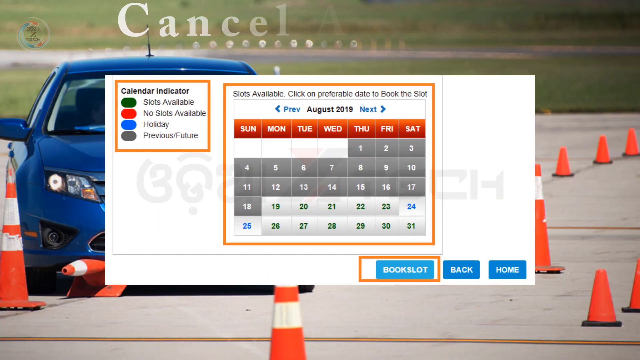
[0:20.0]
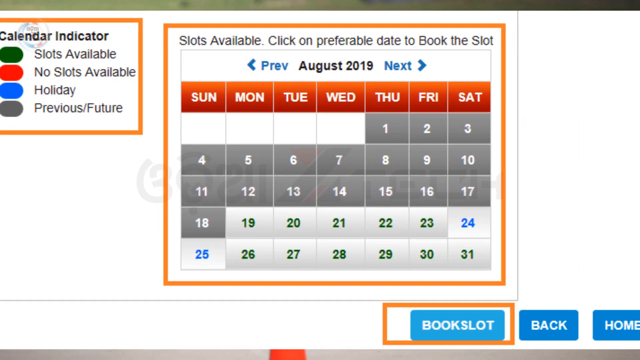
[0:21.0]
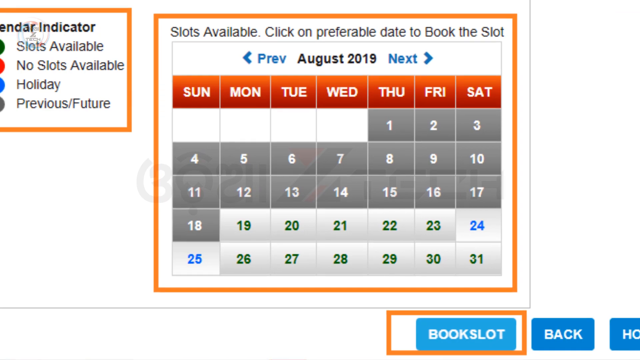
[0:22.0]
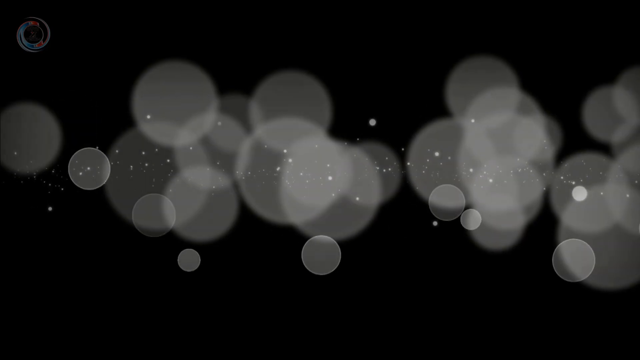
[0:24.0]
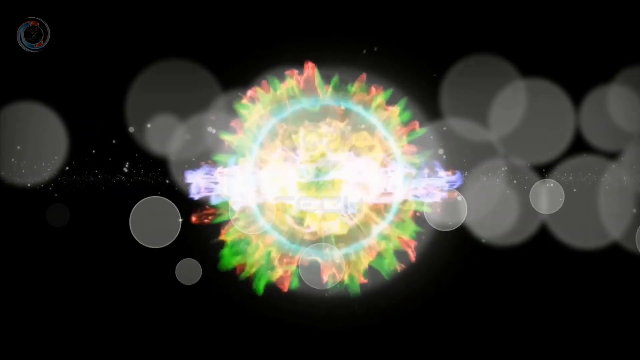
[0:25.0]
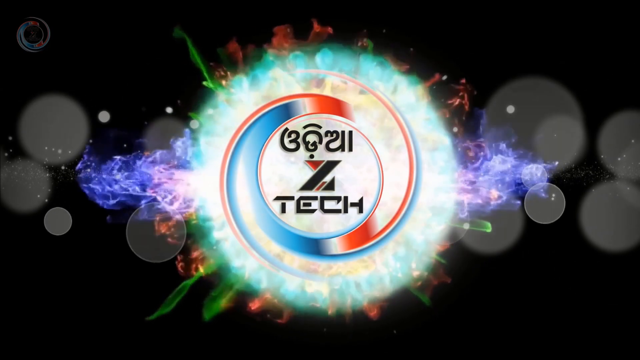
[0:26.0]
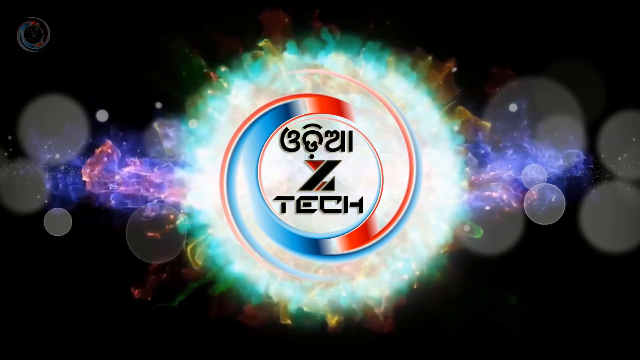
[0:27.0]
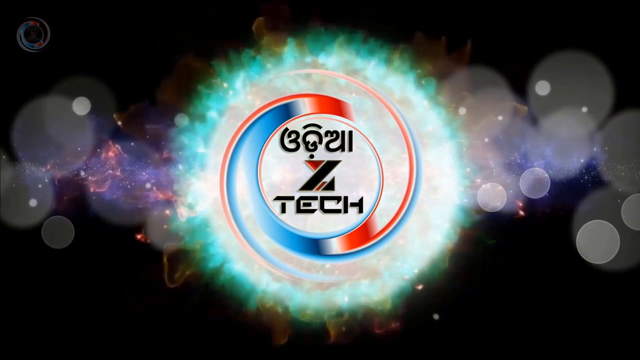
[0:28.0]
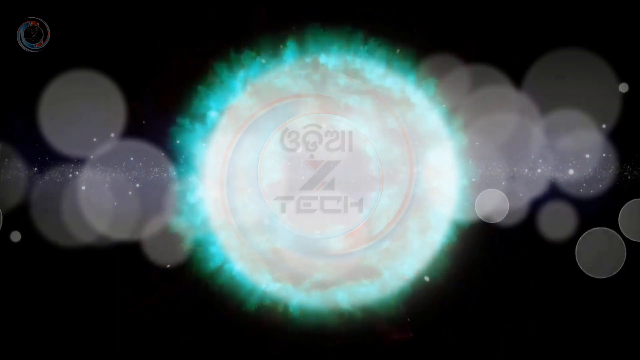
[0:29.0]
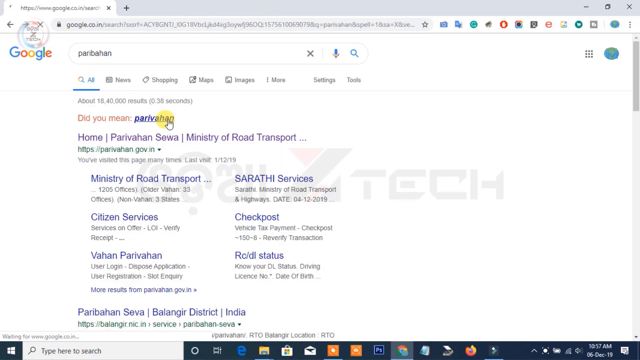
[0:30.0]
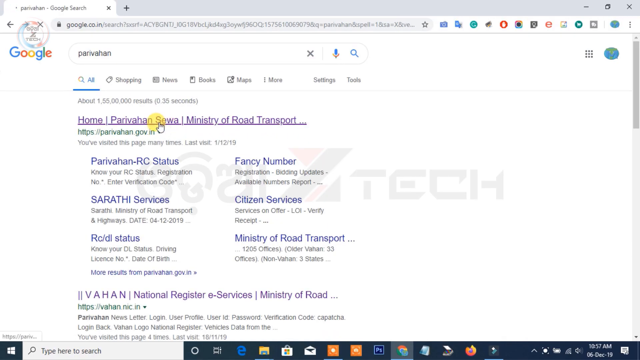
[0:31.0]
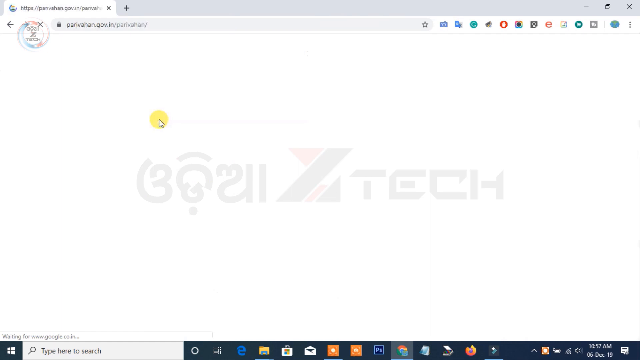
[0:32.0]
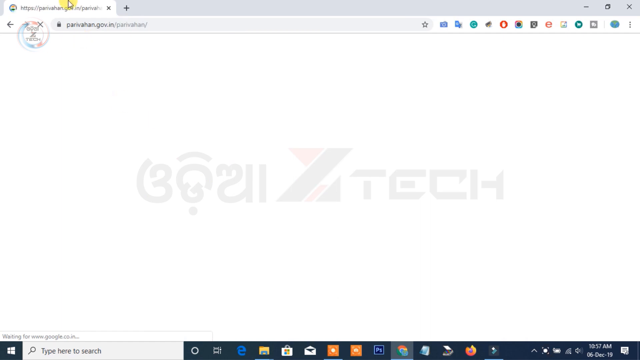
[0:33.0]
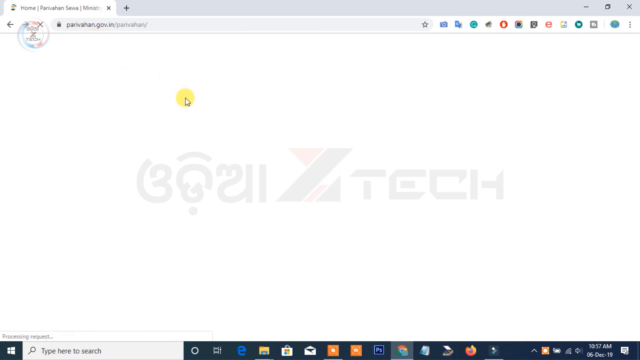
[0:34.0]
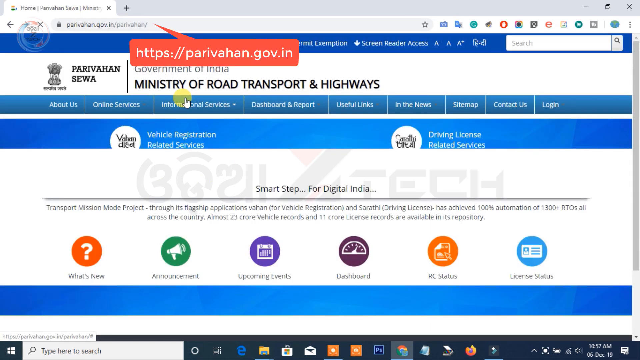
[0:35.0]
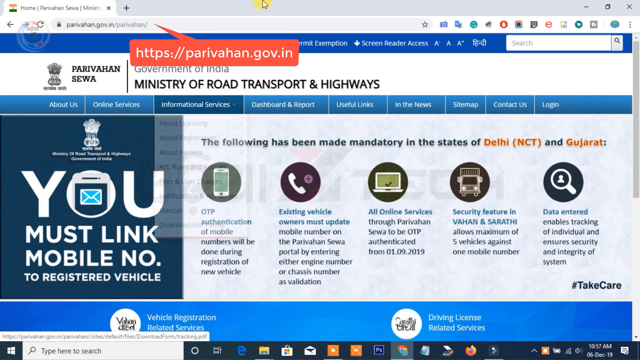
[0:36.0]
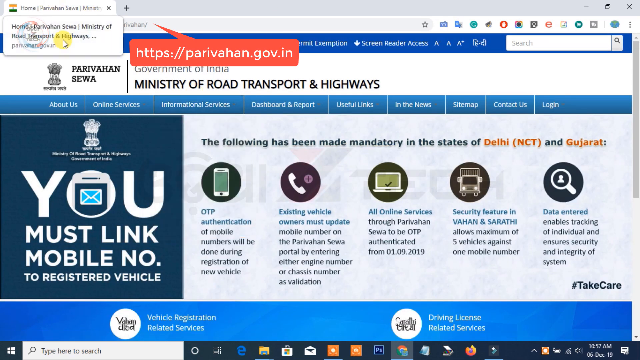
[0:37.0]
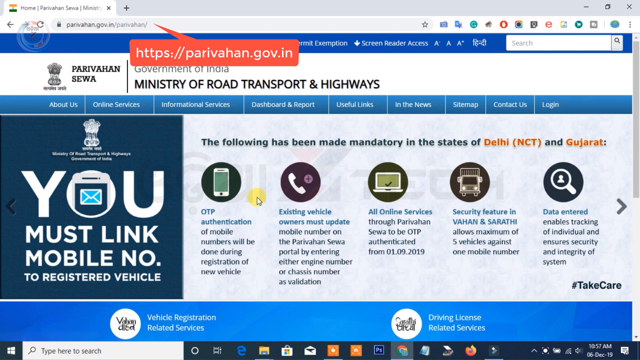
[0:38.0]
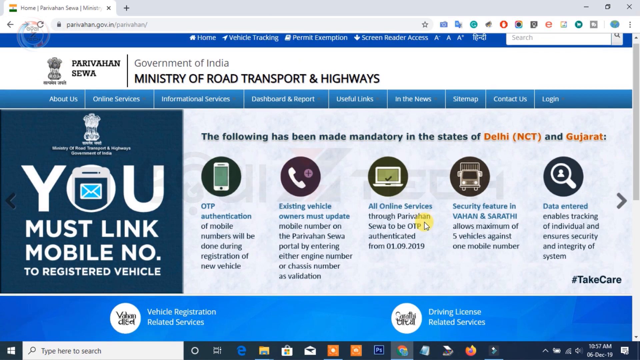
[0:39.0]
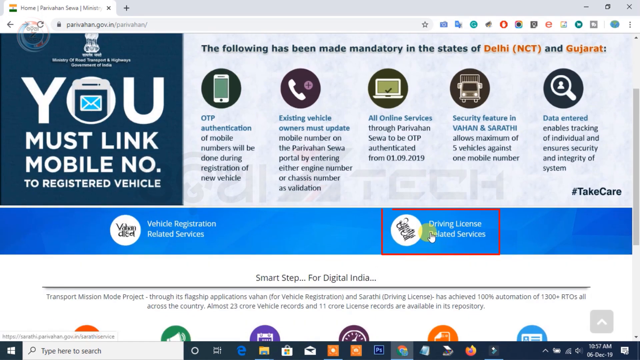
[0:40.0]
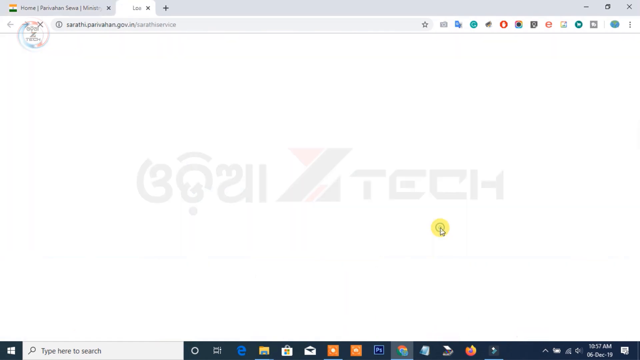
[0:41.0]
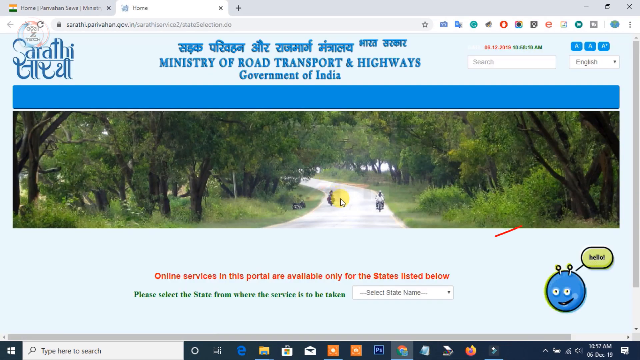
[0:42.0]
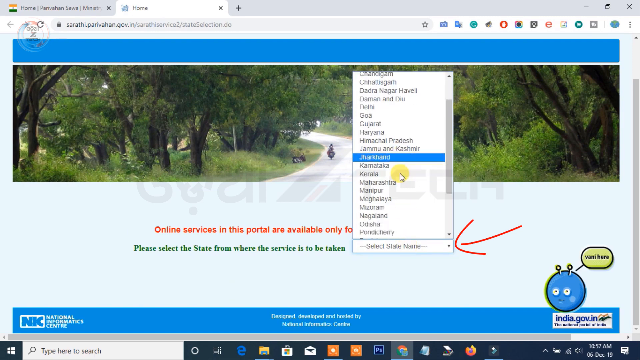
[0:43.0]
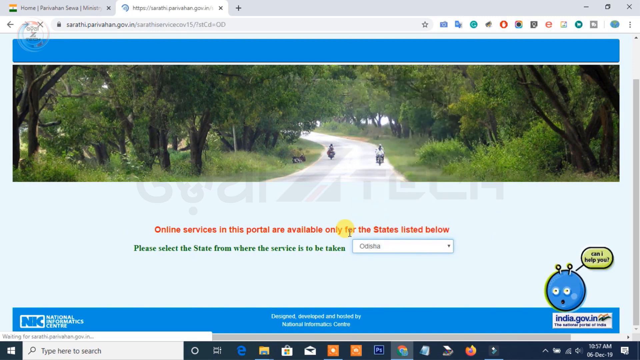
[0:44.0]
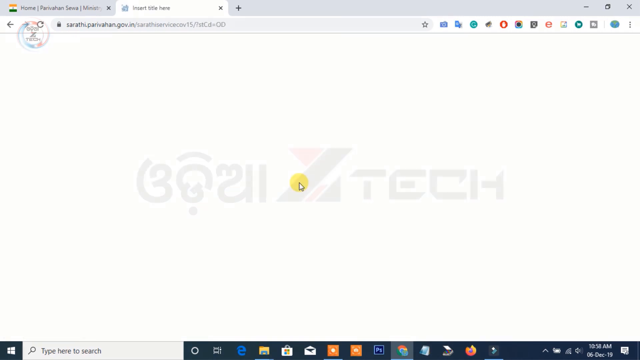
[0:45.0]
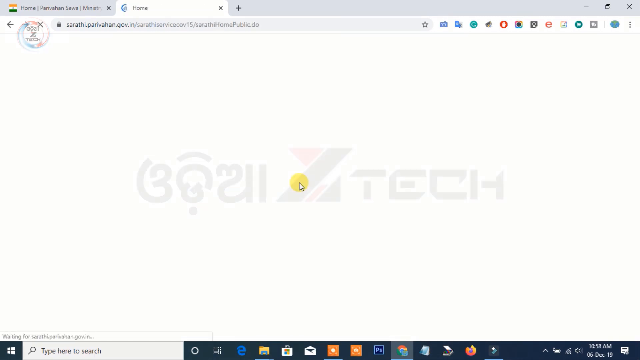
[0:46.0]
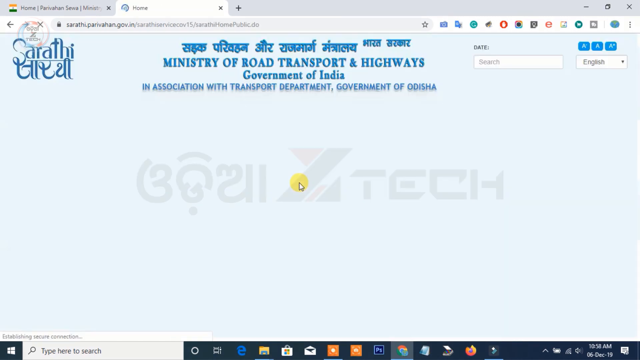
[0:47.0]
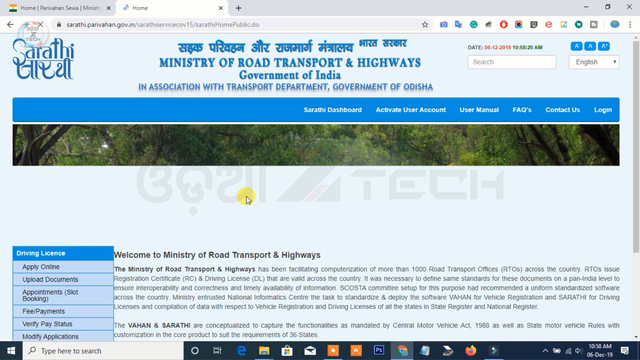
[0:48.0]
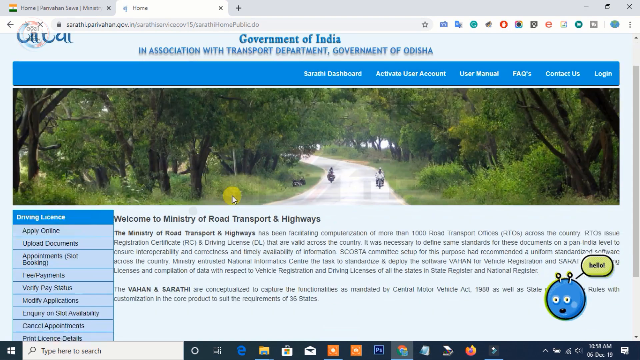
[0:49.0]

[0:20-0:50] A calendar shows the preferable dates to book a slot for August 2019. The dates from the 1st to the 18th appear to be full, while the 19th through the 31st appear wide open. The screen then changes to a black screen with the logo of the ZTEK channel: a swirl pattern in blue, orange and white with a greenish-white circle behind it. Next comes a Google page showing "Paribahan", followed by a white page with a cursor, and then a page reading "Ministry of Road Transport and Highways" from the paribahan.gov.in website. Scrolling down, a link leads to another page showing "Ministry of Road Transport", and the page then freezes.